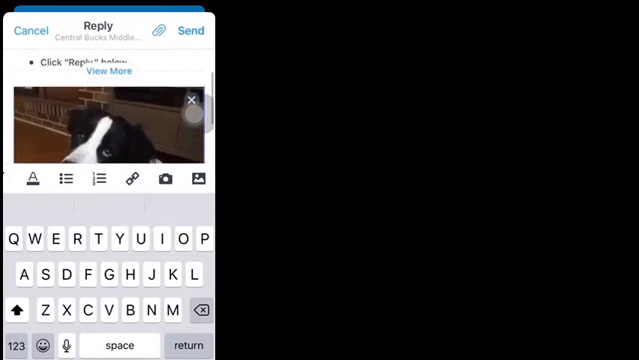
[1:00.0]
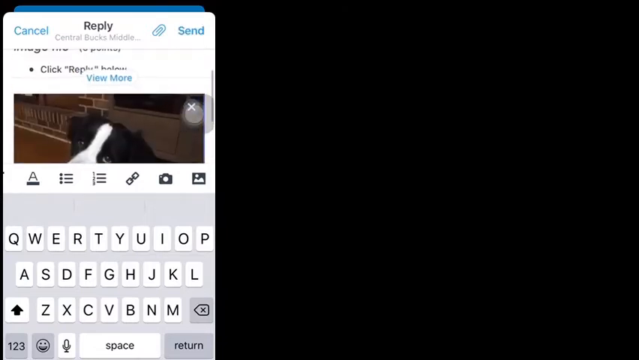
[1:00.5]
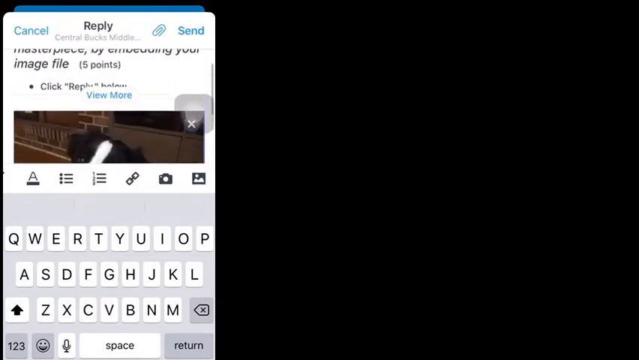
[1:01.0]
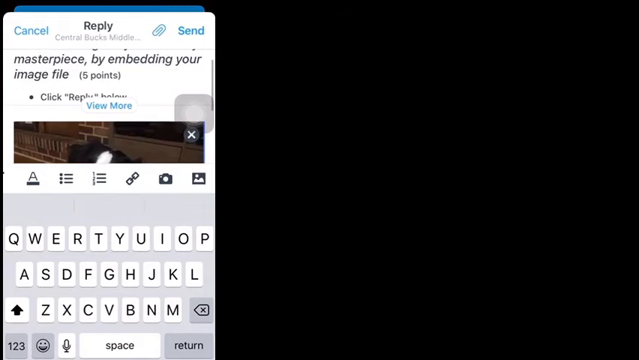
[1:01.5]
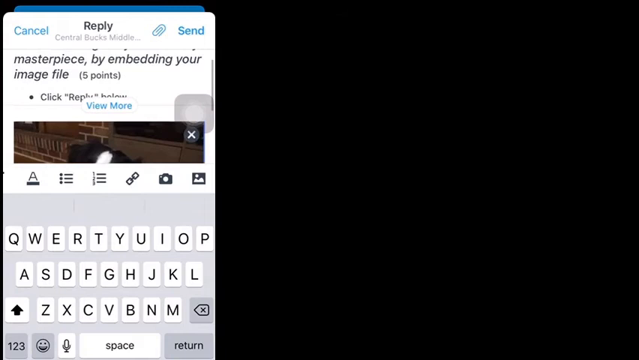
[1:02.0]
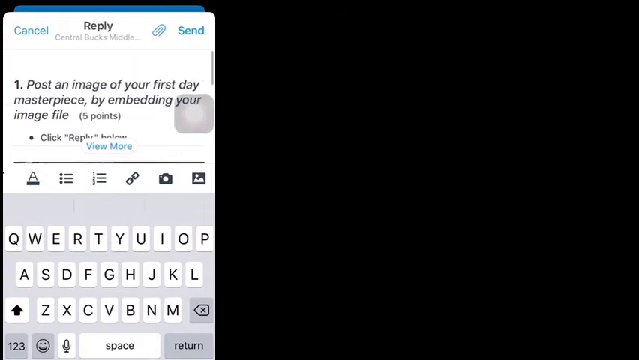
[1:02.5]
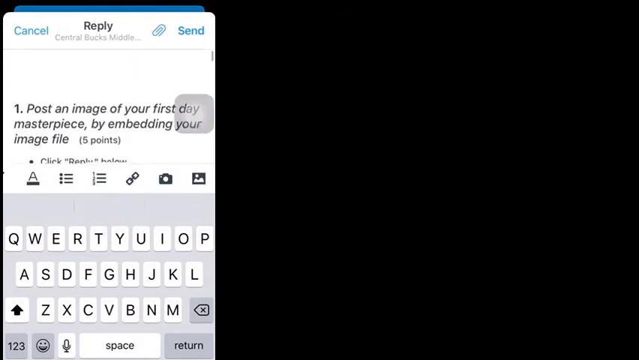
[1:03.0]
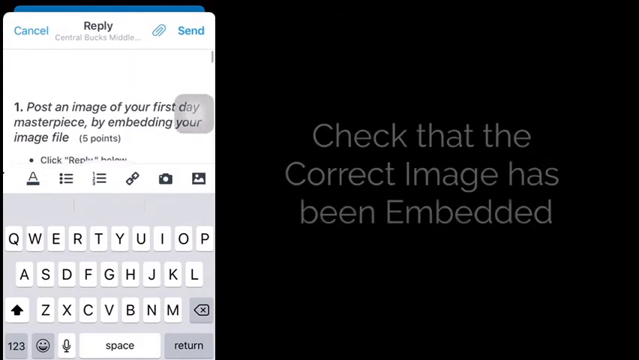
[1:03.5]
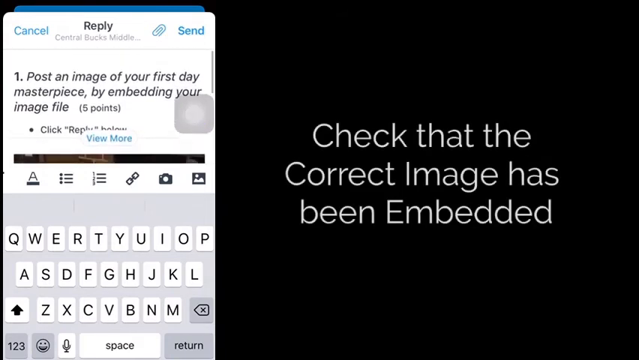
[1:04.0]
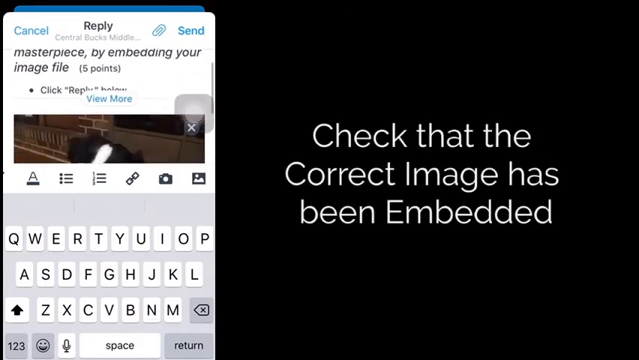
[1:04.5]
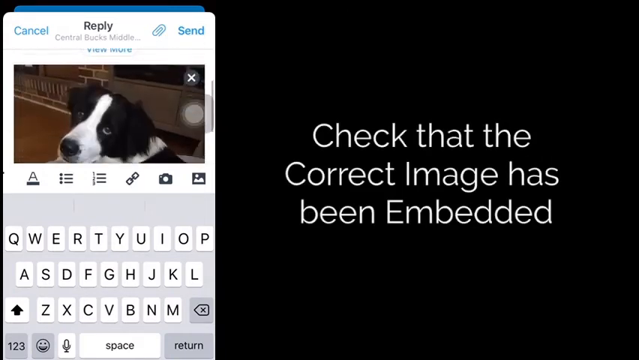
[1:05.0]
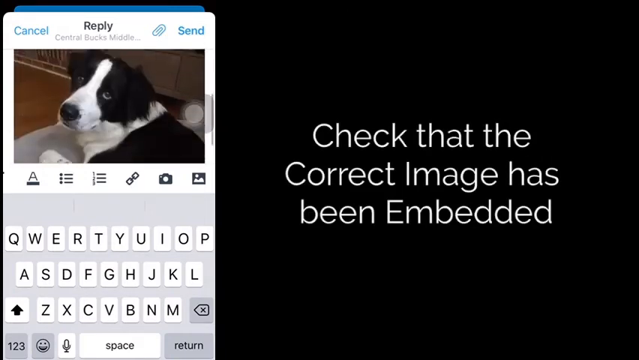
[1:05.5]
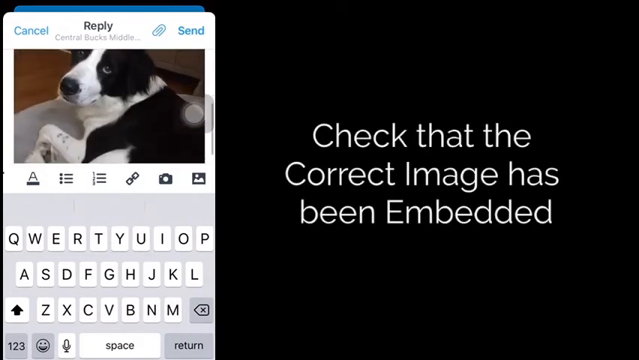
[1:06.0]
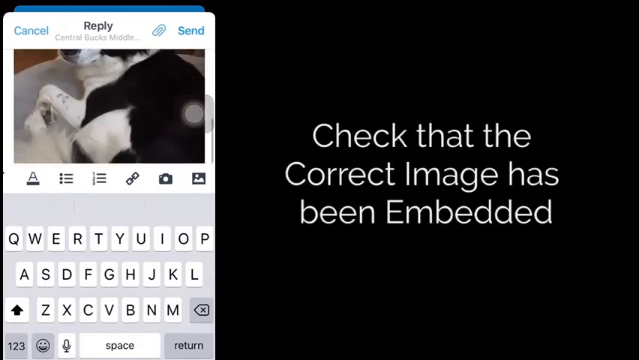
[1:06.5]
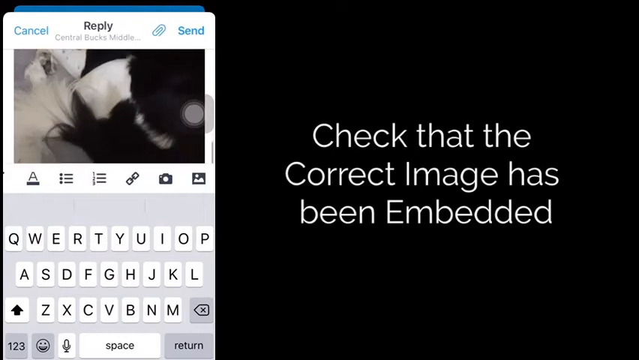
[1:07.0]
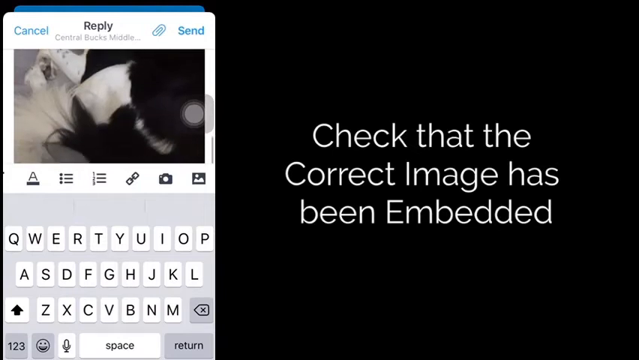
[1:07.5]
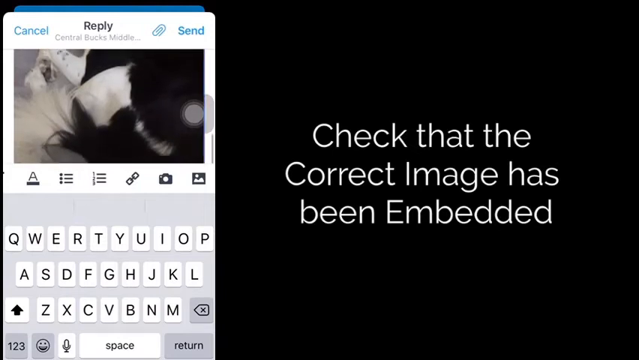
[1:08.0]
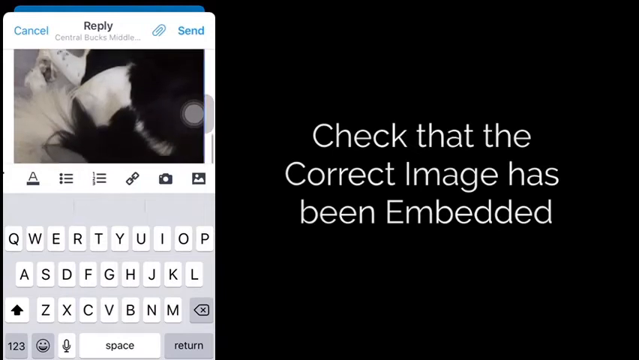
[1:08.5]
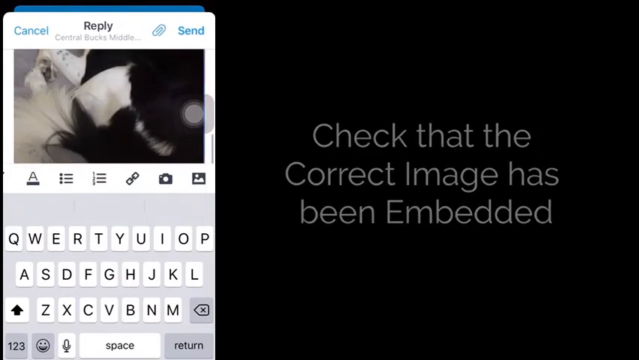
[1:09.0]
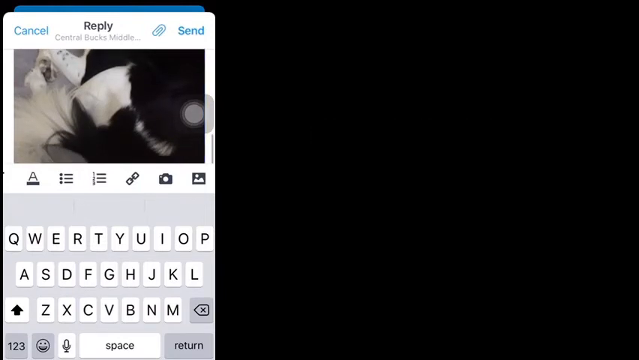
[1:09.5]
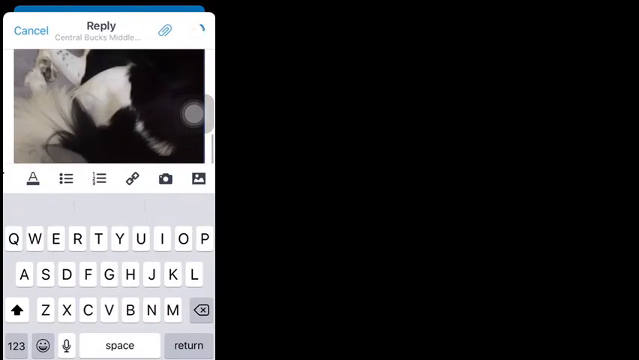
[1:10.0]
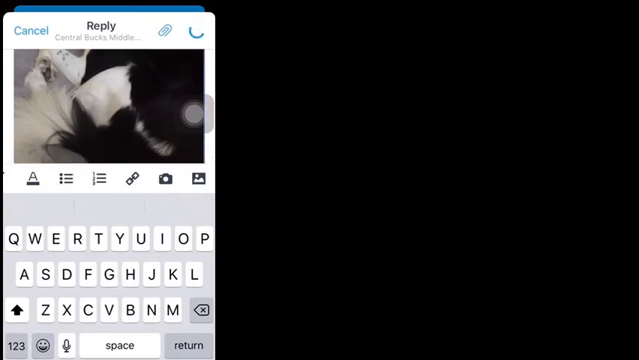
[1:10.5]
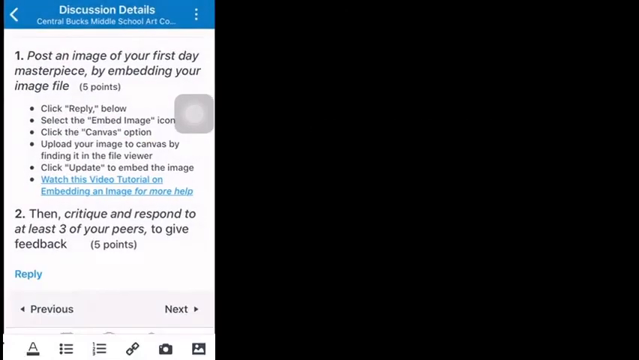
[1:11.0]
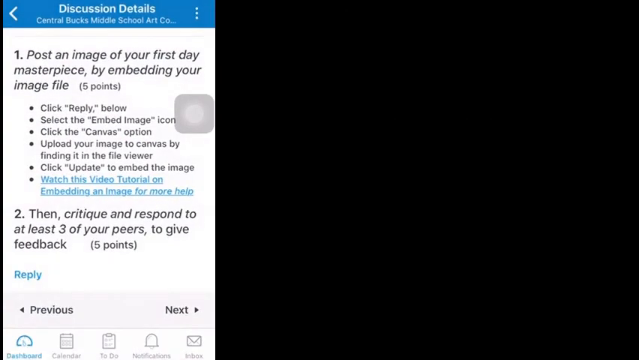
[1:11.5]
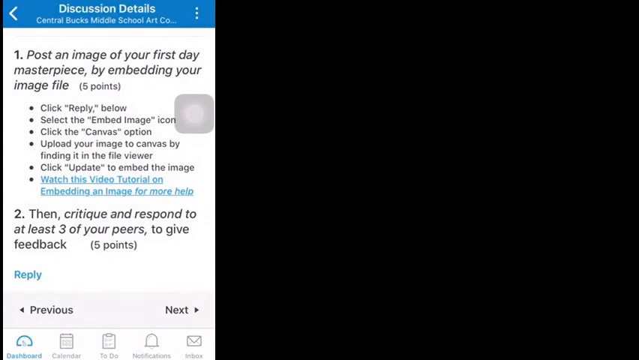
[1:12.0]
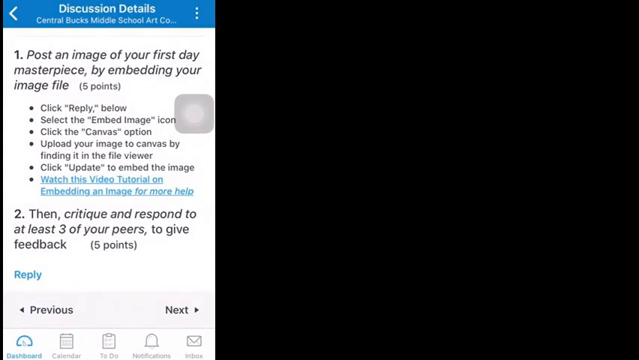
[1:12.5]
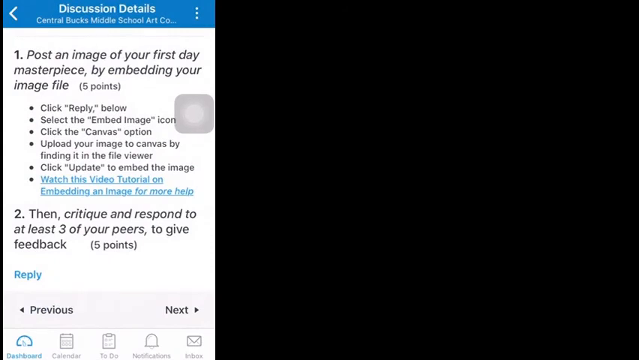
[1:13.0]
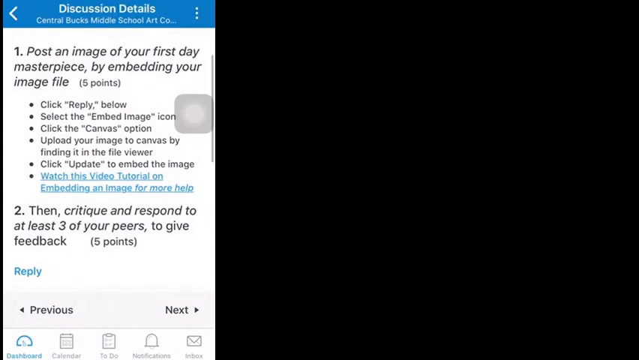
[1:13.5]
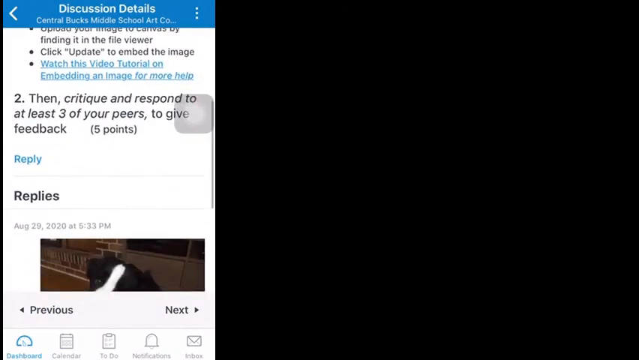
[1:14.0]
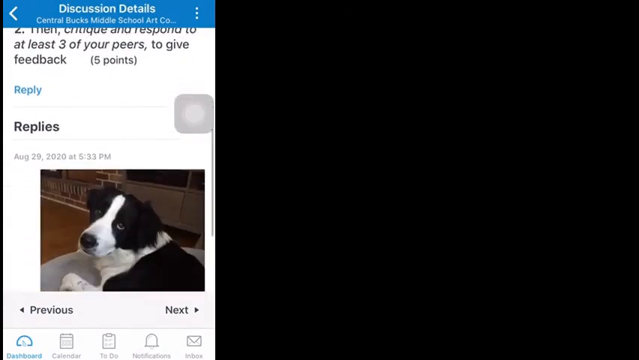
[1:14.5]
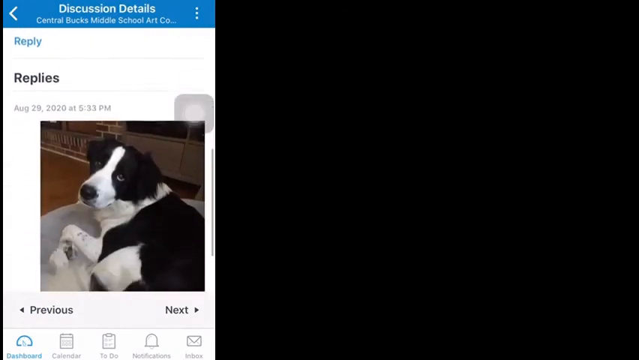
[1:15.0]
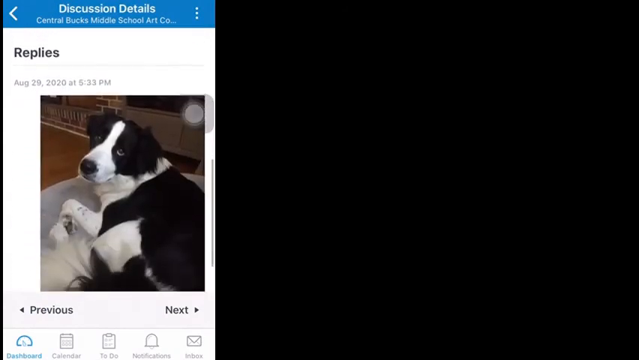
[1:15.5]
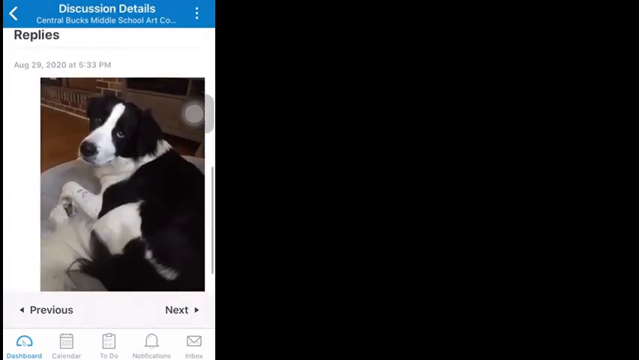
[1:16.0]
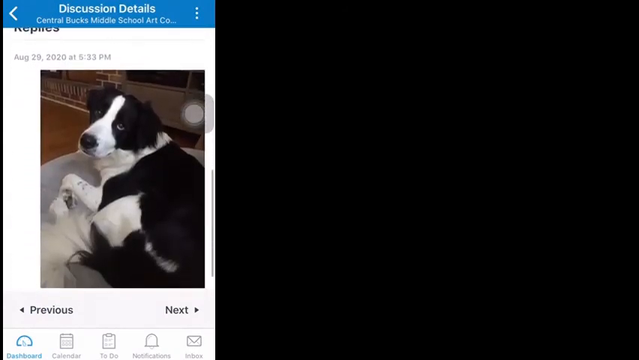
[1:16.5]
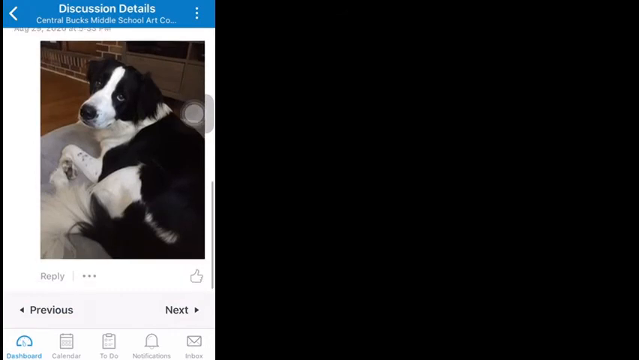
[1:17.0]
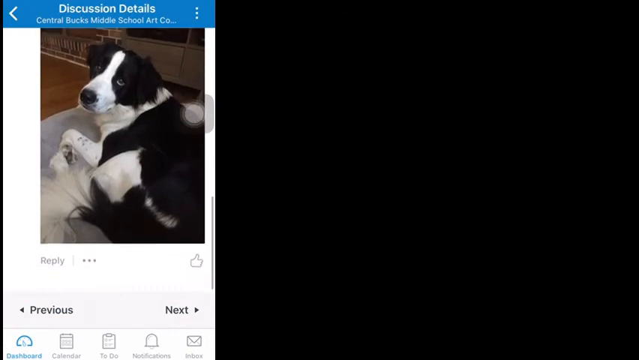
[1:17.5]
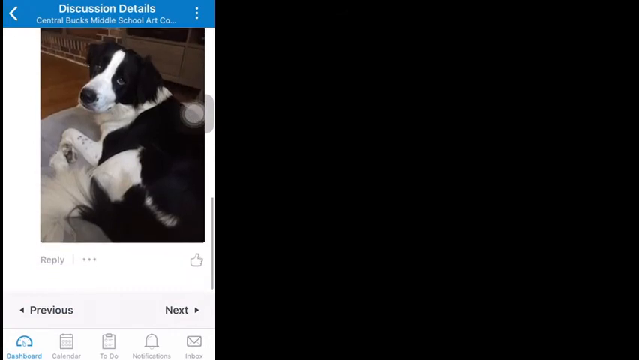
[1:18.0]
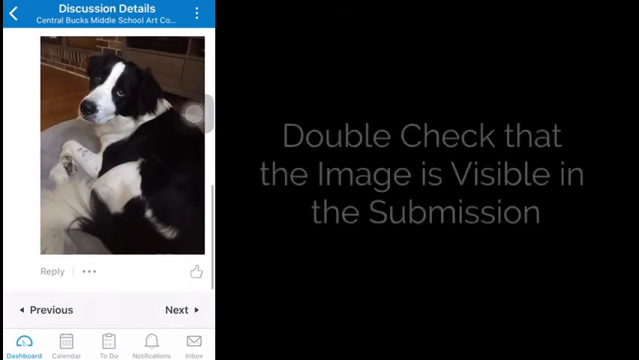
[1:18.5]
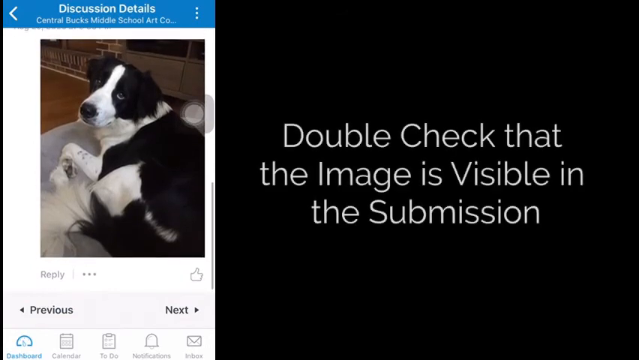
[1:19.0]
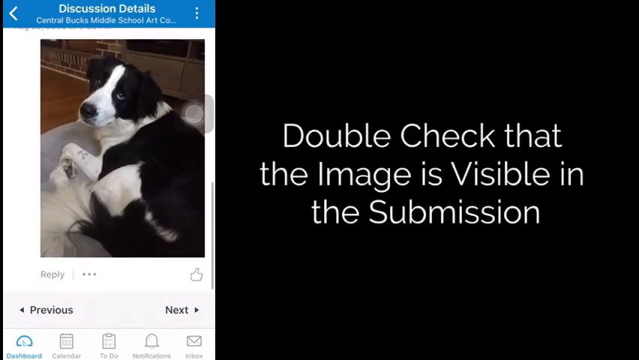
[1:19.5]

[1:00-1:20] At the top of the phone screen on the left is an image of the puppy. The screen scrolls back to the top, where the text "1. post an image of your first day masterpiece..." is shown, then scrolls down past the photo of the puppy. On the right, text appears in light font on the black background: "checked that the correct image has been embedded". The phone screen goes back to the instructions and scrolls down to the replies, which show "August 29, 2020 at 5.33 PM" with a square photo below it of a black and white puppy, maybe in a basket or its bed, looking up at the camera. On the right, on the black background in lighter font, the text "Double-check that the image is visible in the submission" appears.